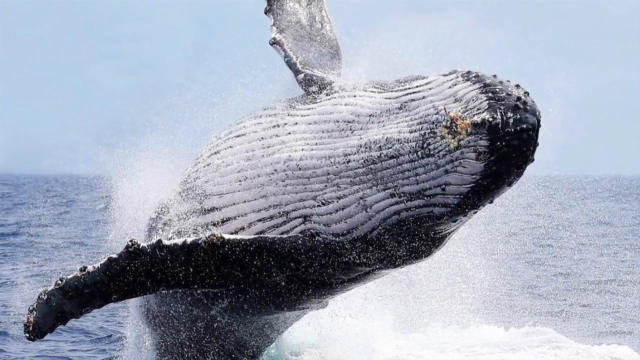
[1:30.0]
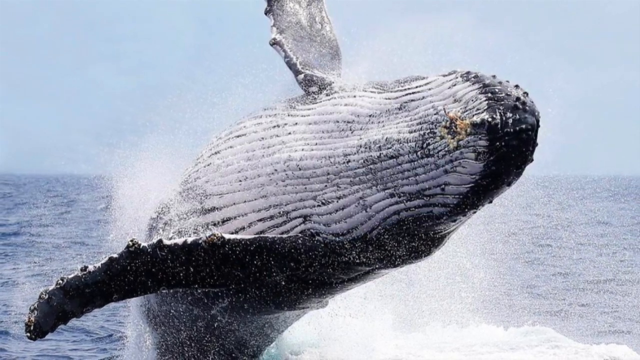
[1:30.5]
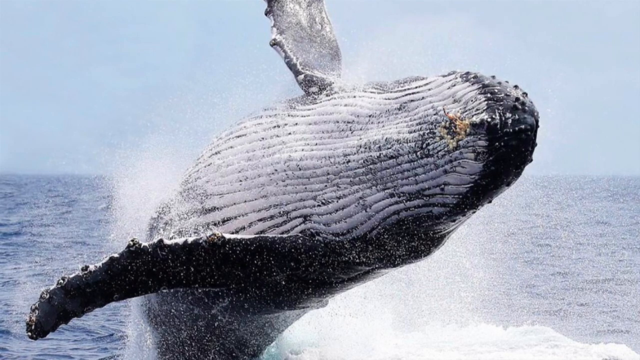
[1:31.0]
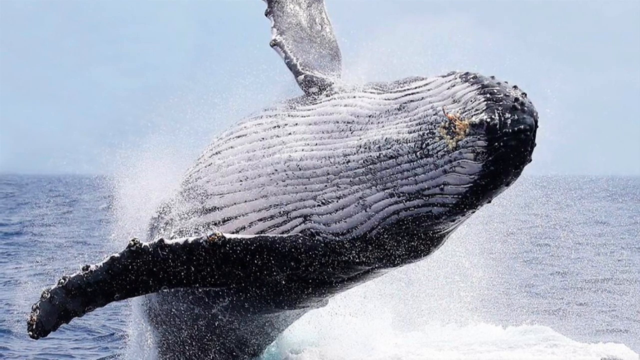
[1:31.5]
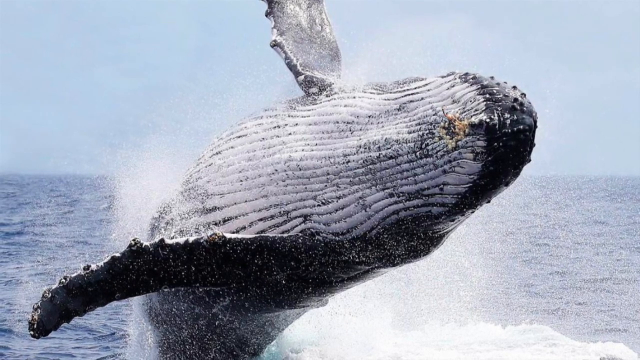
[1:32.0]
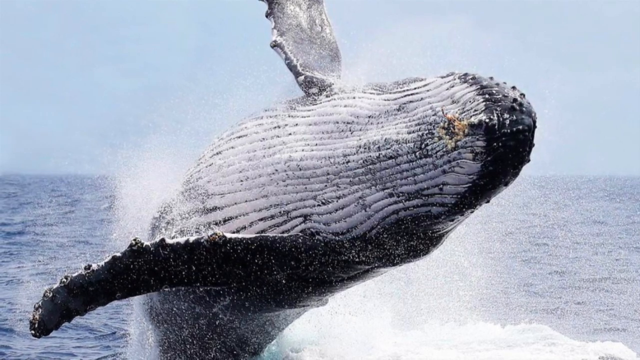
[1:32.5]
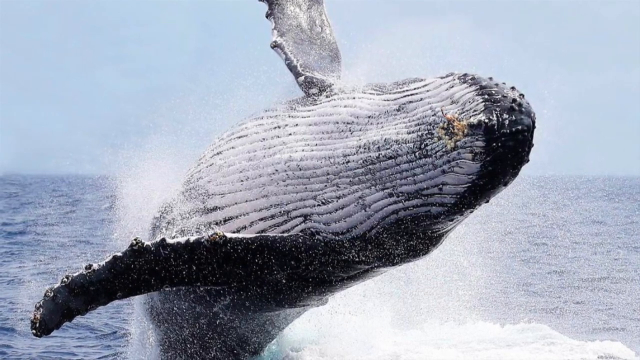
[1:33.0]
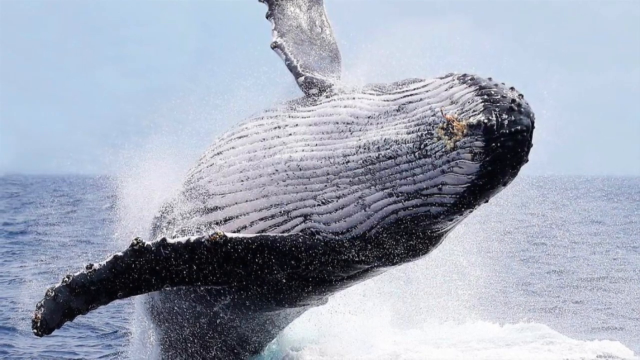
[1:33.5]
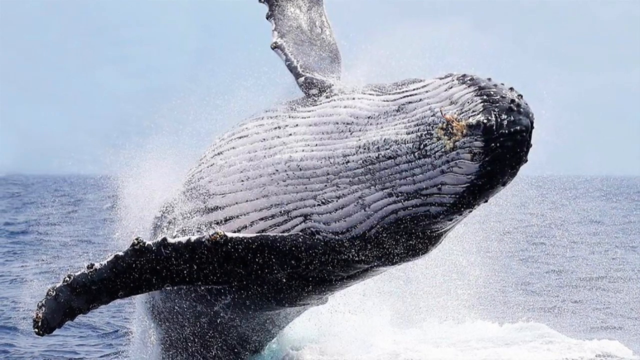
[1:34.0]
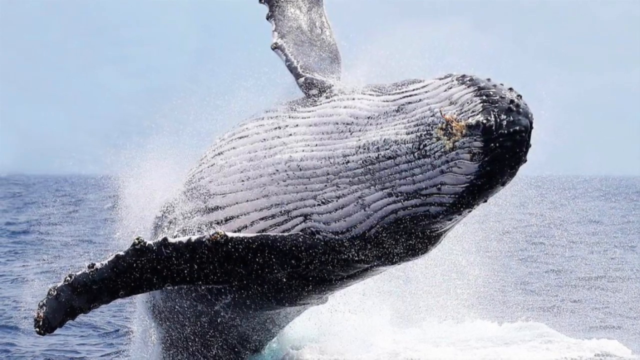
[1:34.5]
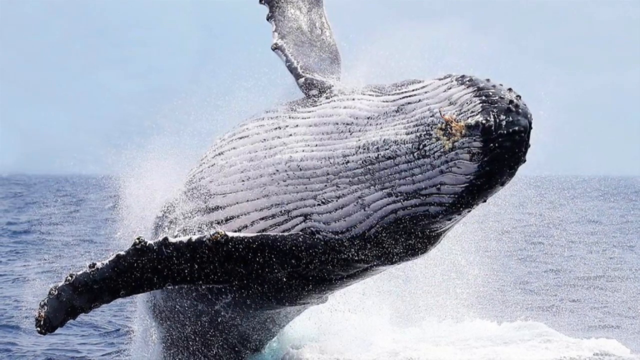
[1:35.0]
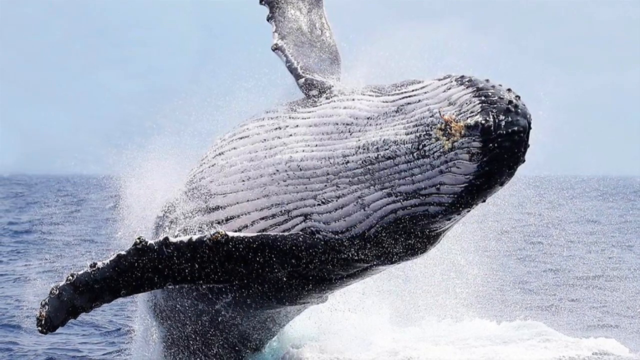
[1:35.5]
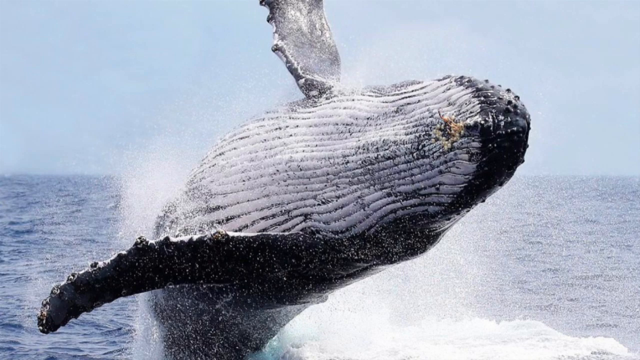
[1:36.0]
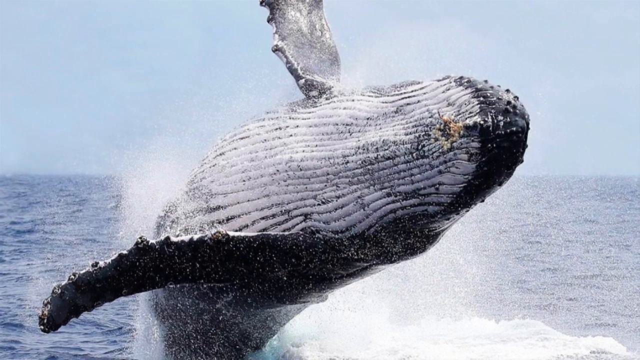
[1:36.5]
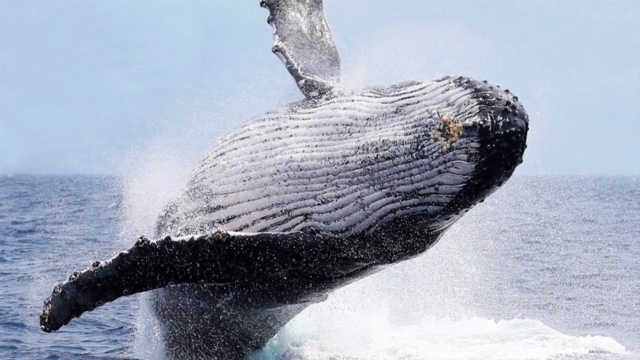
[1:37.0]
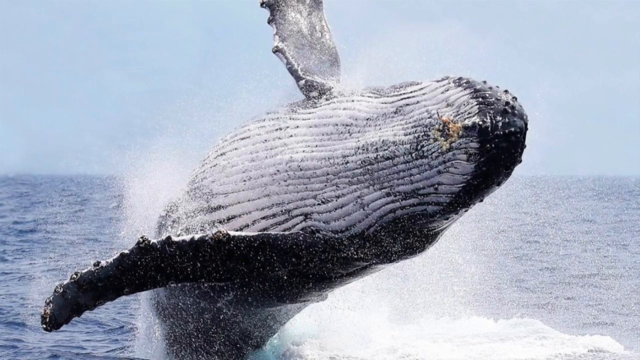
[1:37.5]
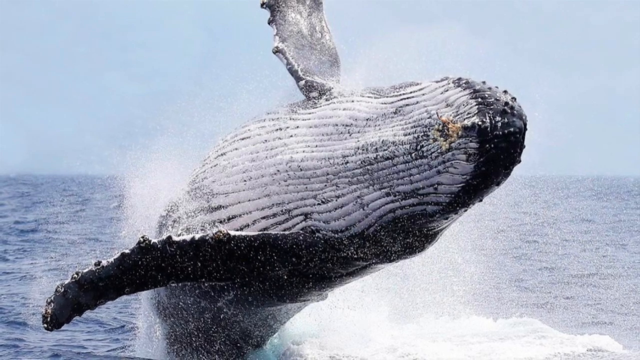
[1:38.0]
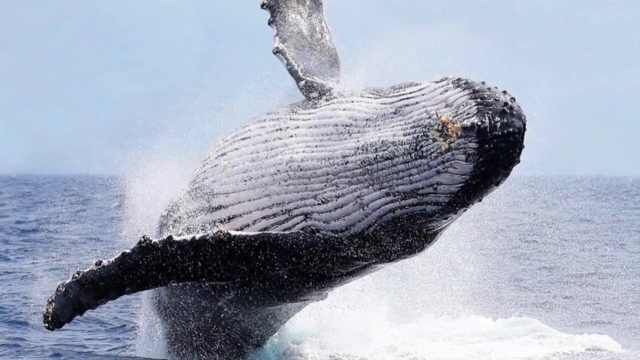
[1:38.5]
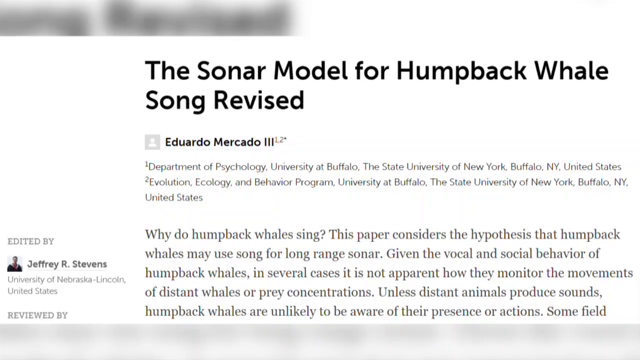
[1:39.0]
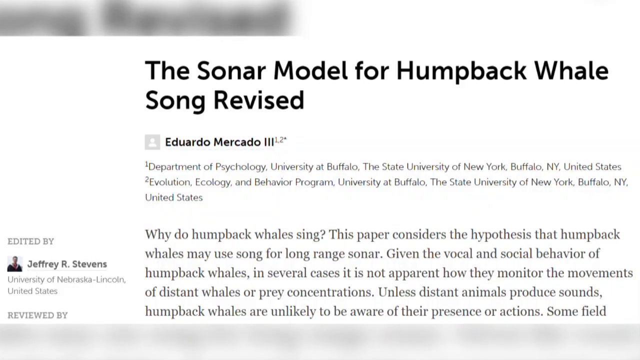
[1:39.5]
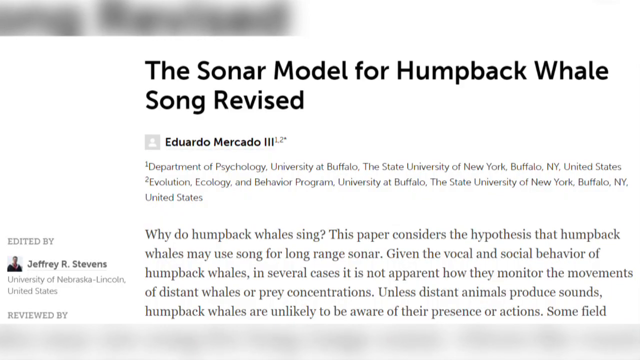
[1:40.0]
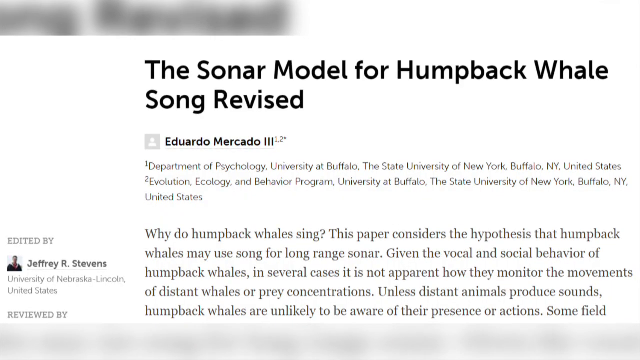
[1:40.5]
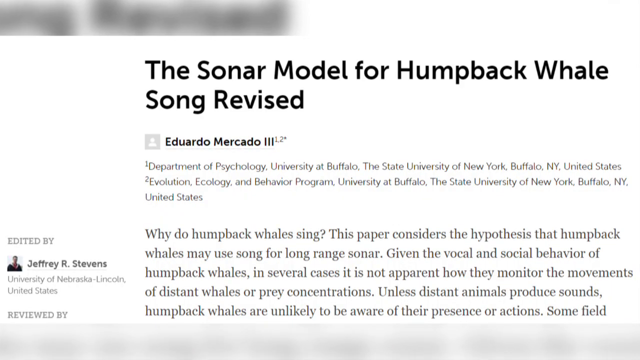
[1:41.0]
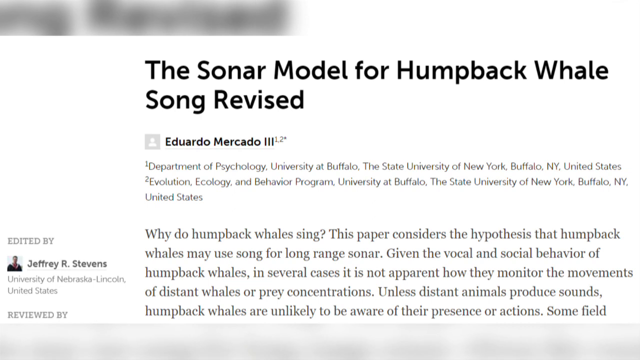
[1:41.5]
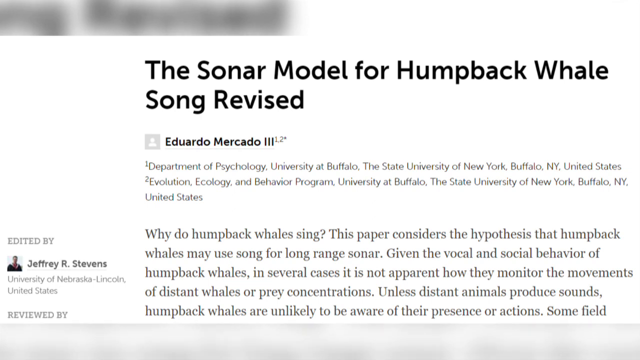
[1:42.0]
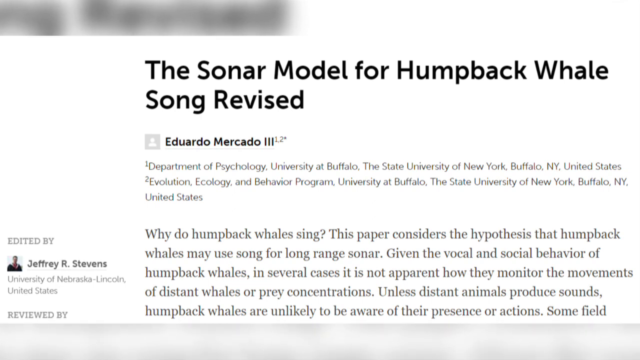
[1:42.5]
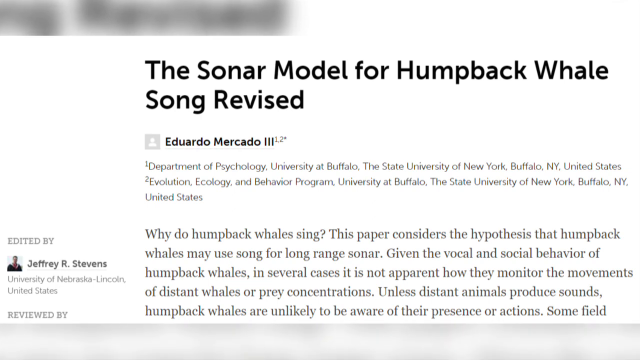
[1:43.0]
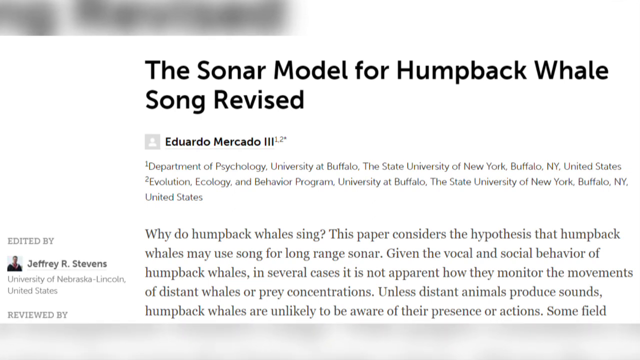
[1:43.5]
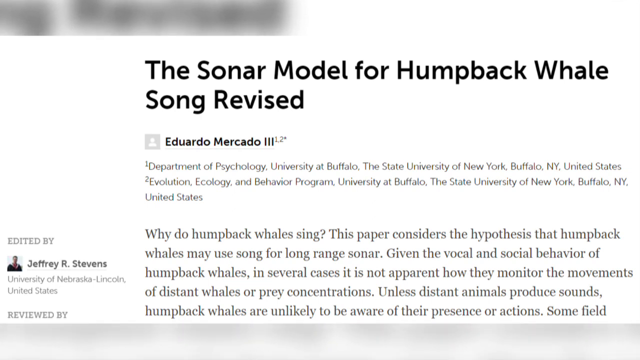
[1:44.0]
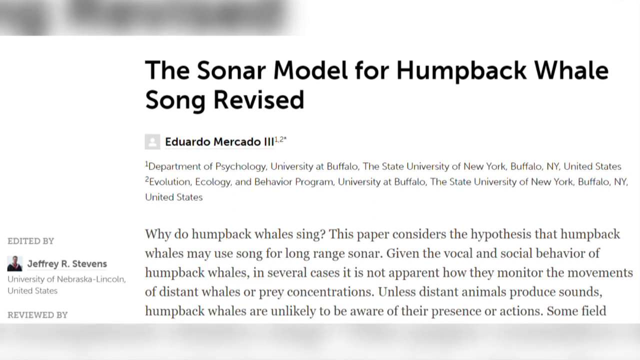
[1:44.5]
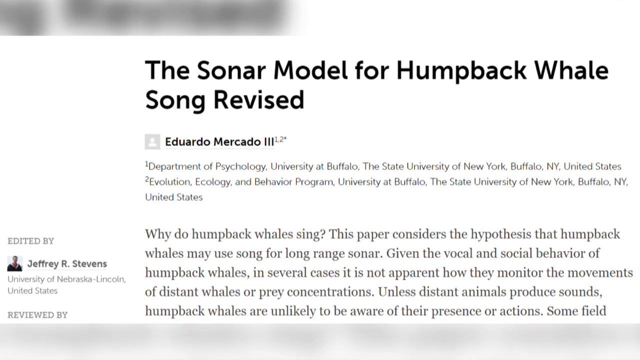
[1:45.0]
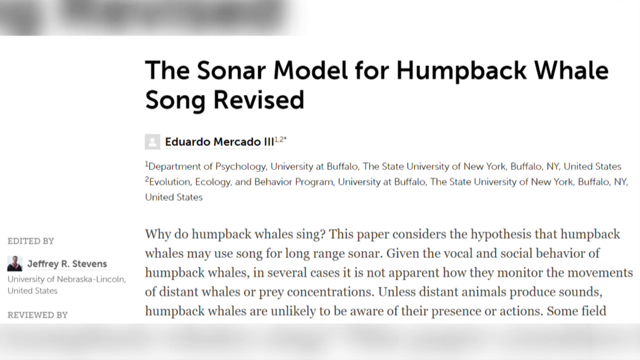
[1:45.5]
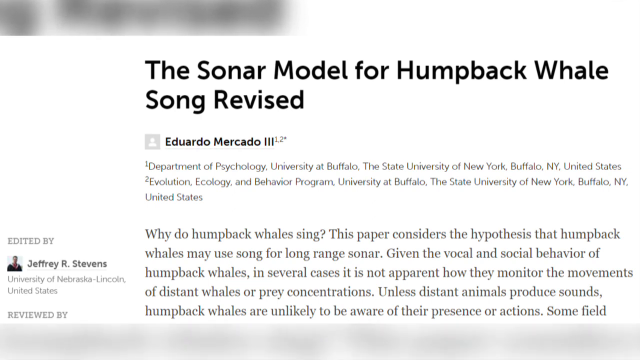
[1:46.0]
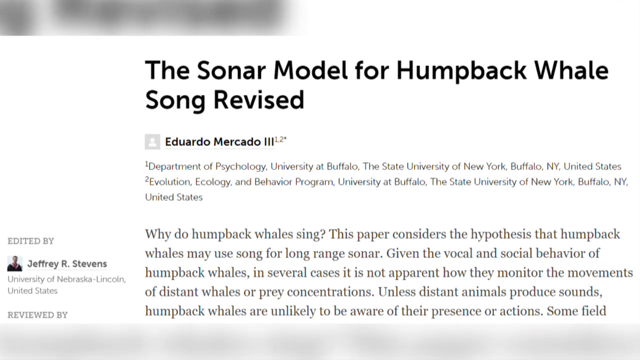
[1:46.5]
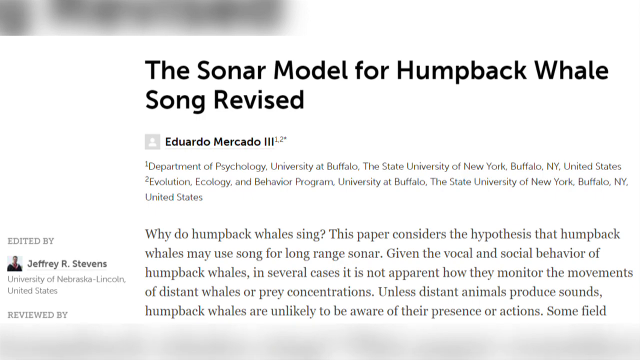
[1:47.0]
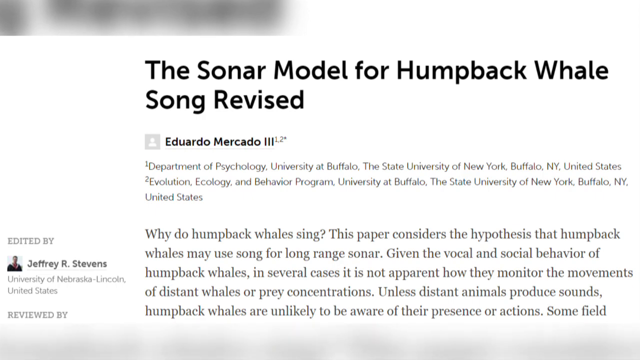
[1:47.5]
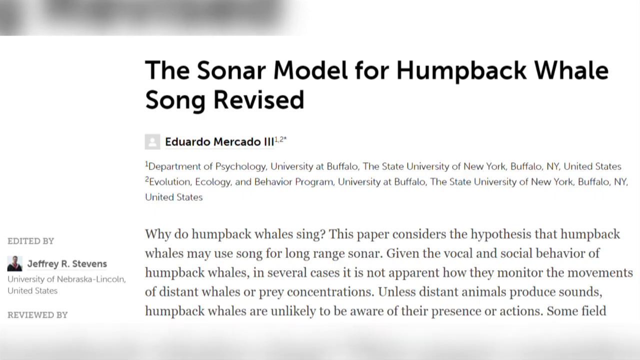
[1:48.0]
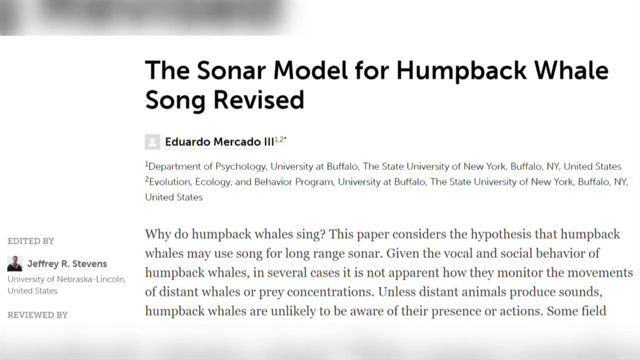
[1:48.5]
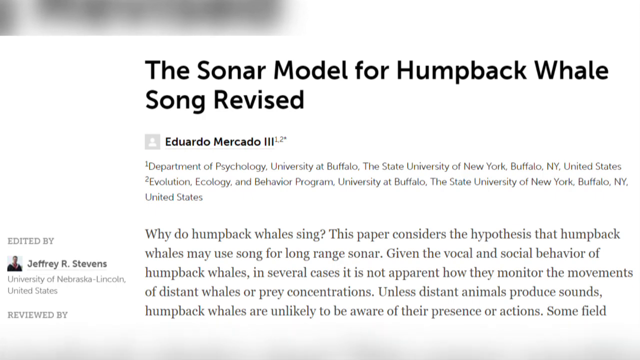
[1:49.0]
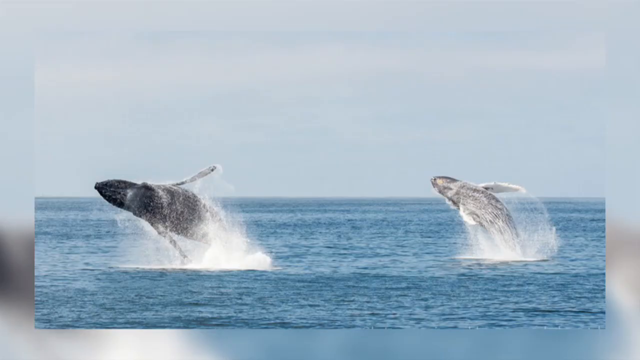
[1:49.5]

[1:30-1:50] A photo shows a whale outside the water, its only point of contact with the water's surface being its rear fin. The lower part of the animal is visible, with white and black striations. The whale's white and black fins are in the upper and lower parts of the frame. In the background the sky is visible at the top and the sea at the bottom. Next comes an extract of an online article with a black title in the upper part and a paragraph of black text on a white background in the lower part. Below, on the left, there are lines of light gray and black text, with a very small square photo at the left end of the frame. At the end, for a few moments, an image of two whales jumping out of the water appears.